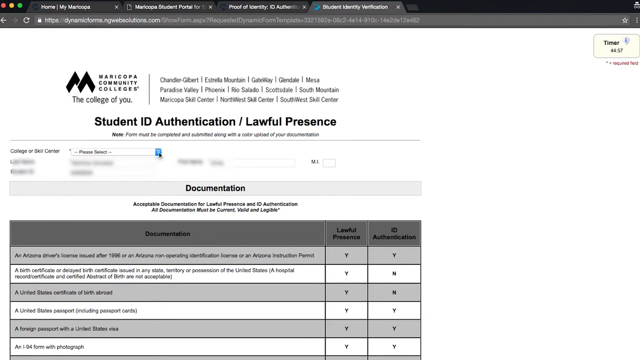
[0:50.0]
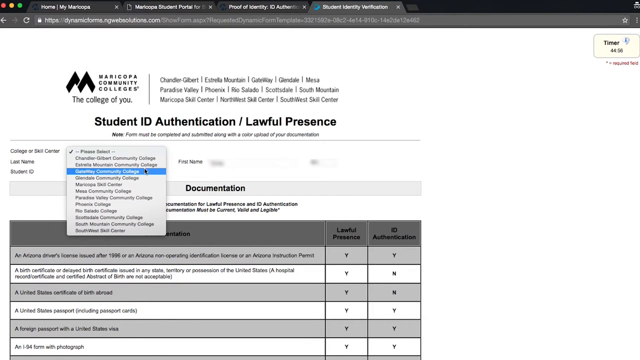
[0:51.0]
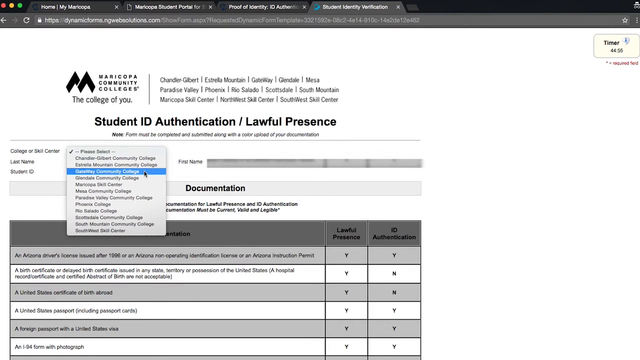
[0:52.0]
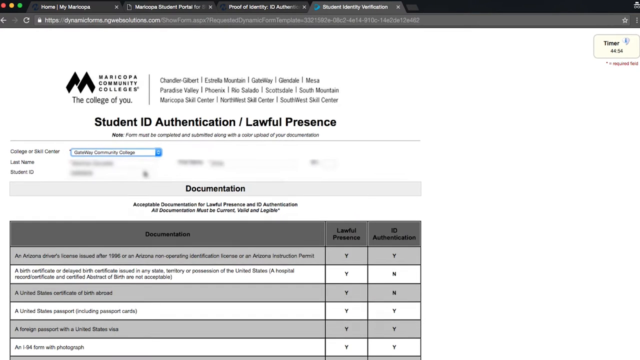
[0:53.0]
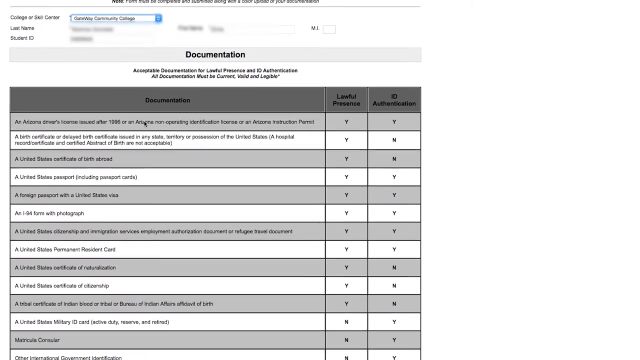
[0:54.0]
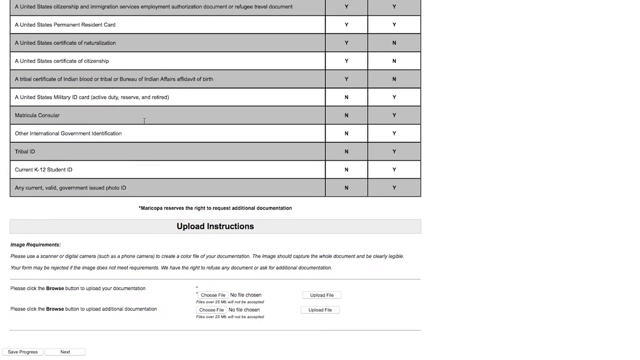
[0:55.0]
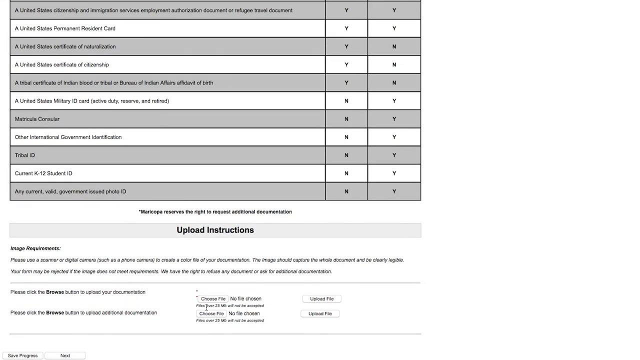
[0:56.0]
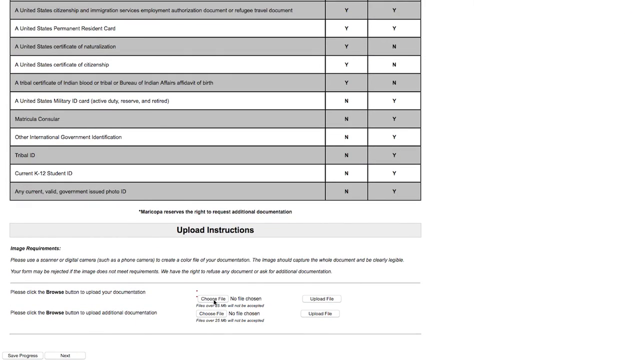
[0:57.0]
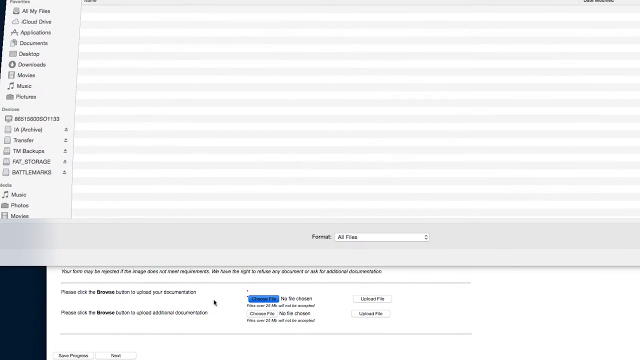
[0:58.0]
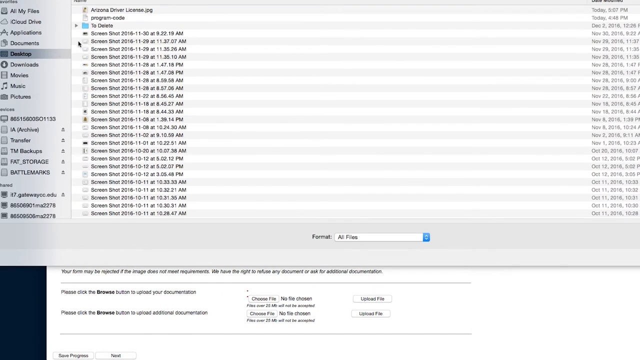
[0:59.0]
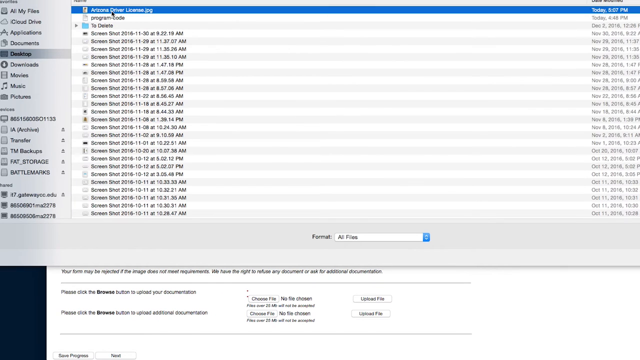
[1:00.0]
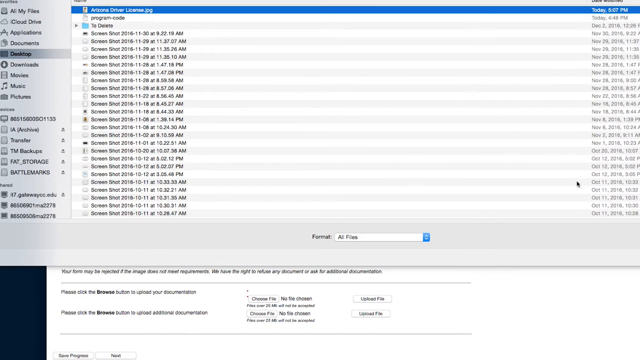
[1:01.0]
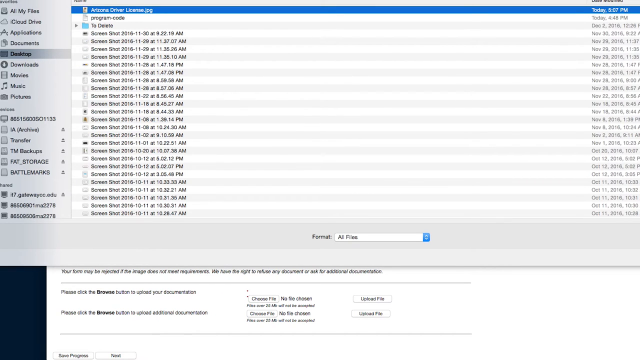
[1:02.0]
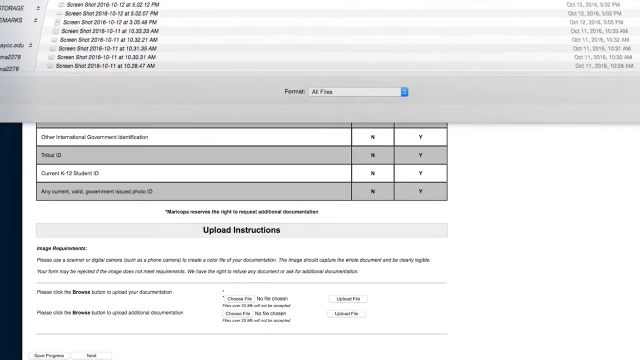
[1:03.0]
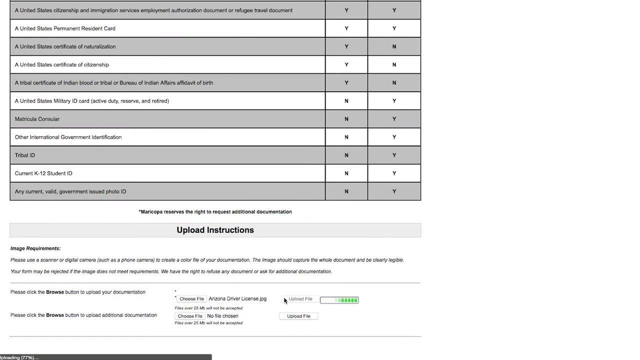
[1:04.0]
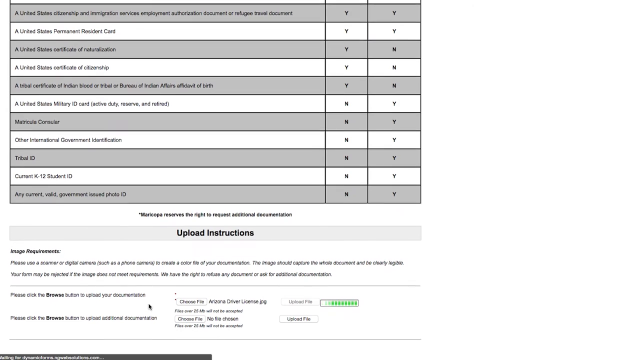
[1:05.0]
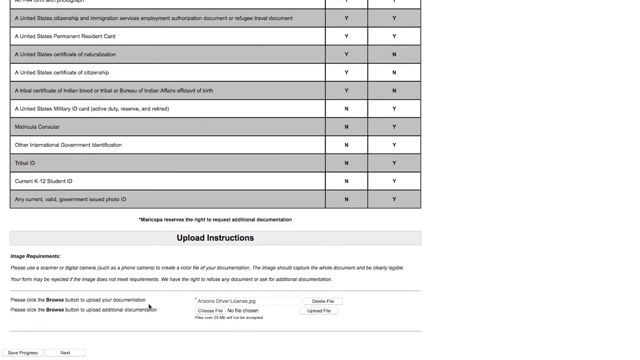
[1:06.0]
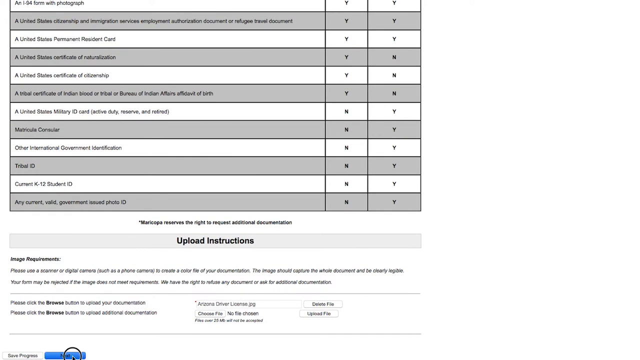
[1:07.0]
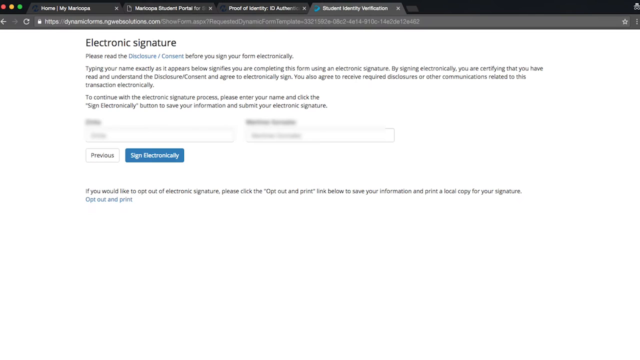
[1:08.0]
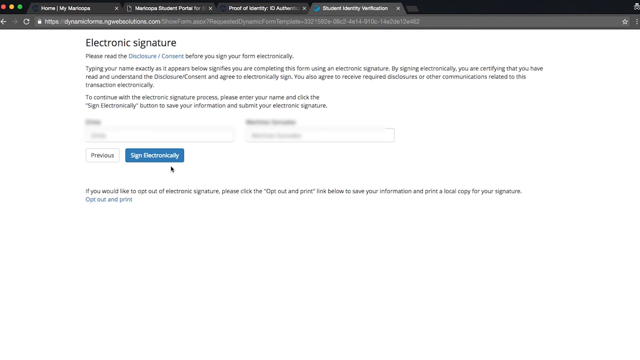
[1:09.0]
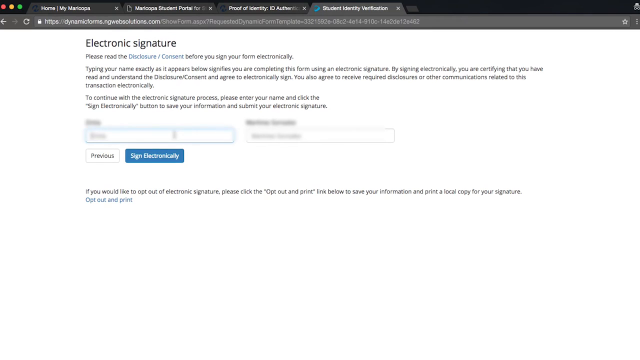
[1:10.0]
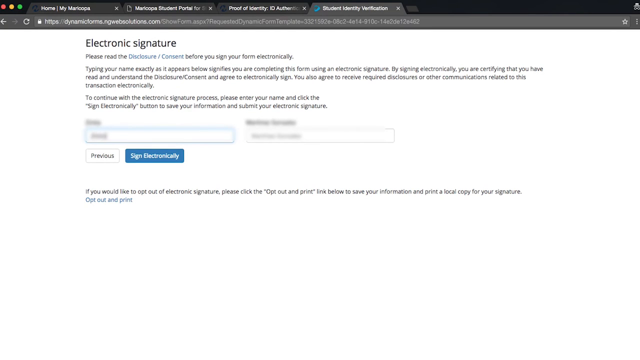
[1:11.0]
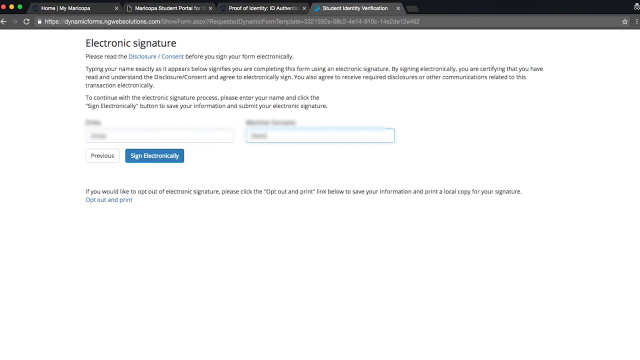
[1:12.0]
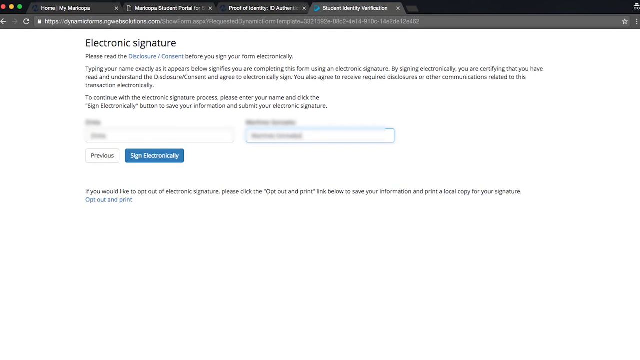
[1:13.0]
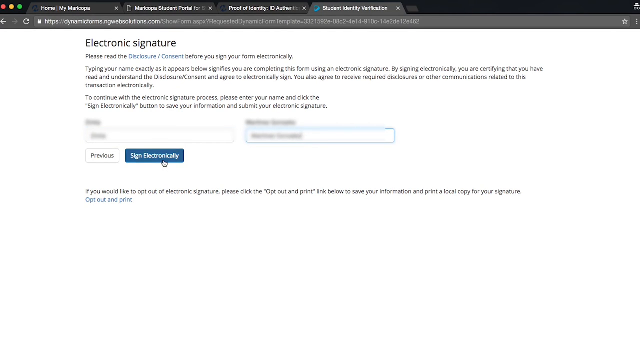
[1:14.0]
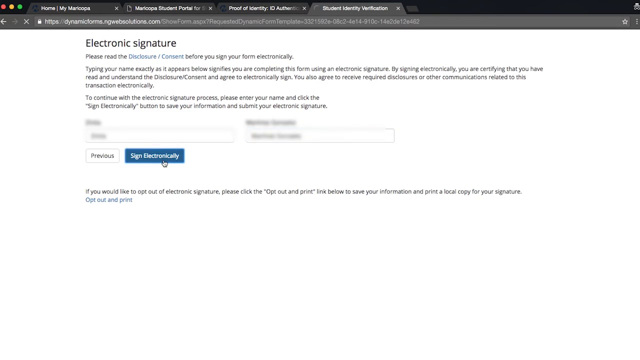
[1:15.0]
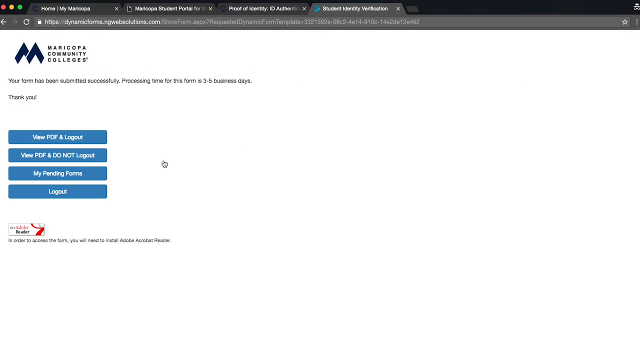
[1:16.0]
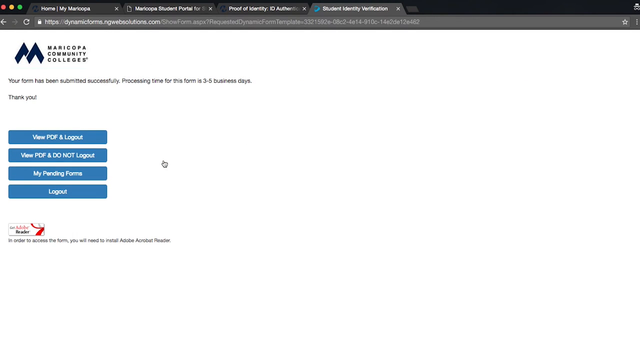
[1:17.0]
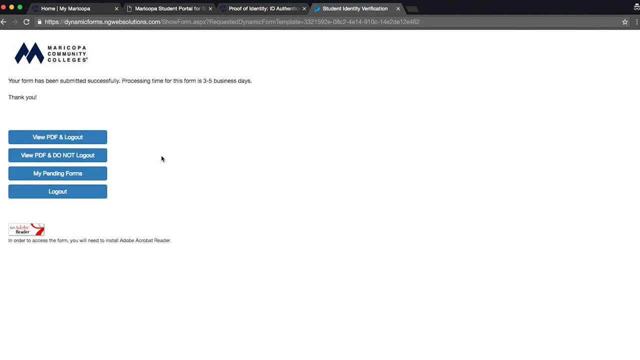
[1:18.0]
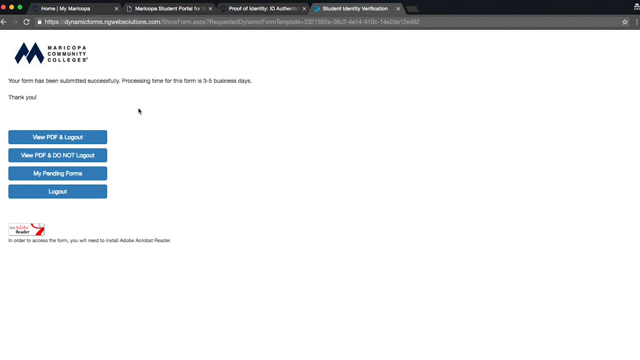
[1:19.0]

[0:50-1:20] The Maricopa Community College ID identification page is on screen, with a gray header in black text reading "documentation". Under it is a graph of the IDs accepted by the campus. The user selects their specific campus from a drop-down menu, scrolls past the information about the different IDs, and goes down to upload their ID. They select choose file, which opens a file manager that is mostly gray with different buttons. They scroll through the options in the file manager, mostly pictures, select their driver license, press save, and the file is uploaded. The next page asks for an electronic signature; the user signs and clicks the button to sign electronically. The view then goes back to the Maricopa College page.